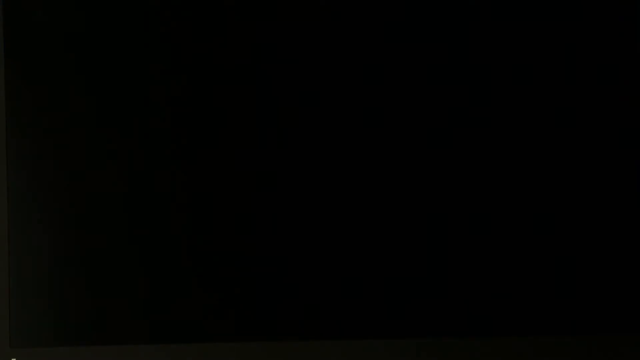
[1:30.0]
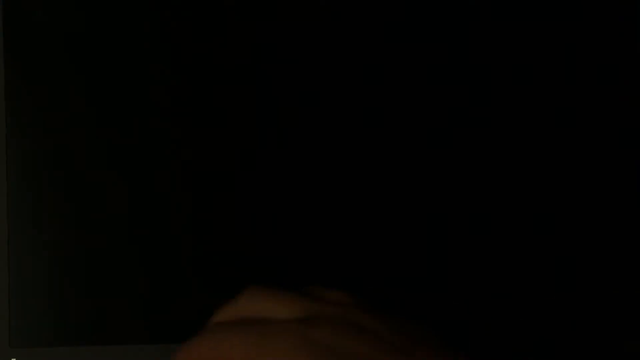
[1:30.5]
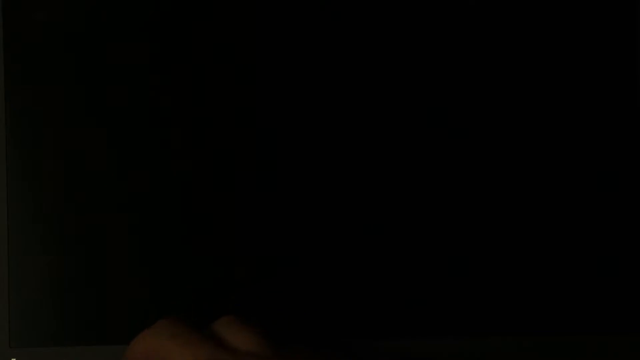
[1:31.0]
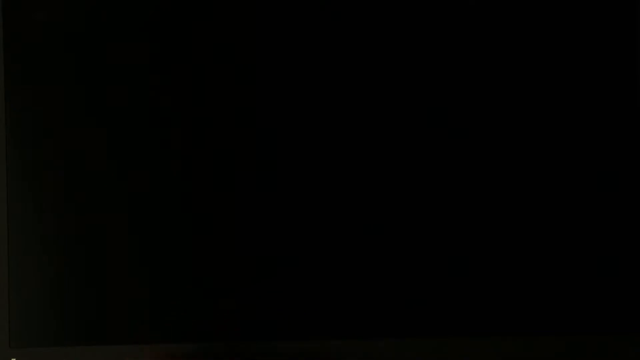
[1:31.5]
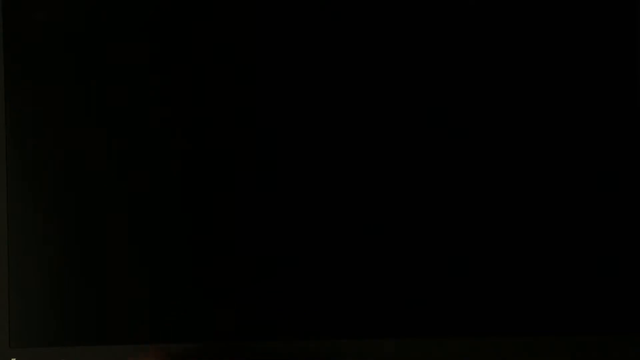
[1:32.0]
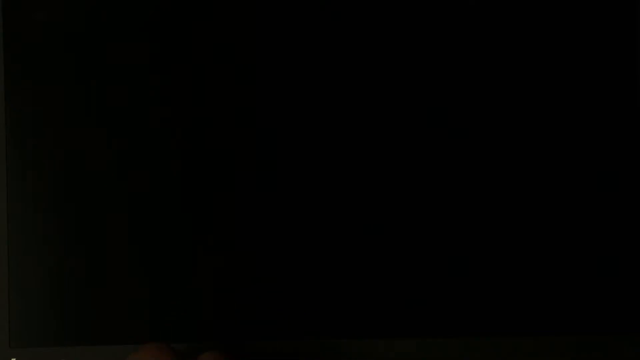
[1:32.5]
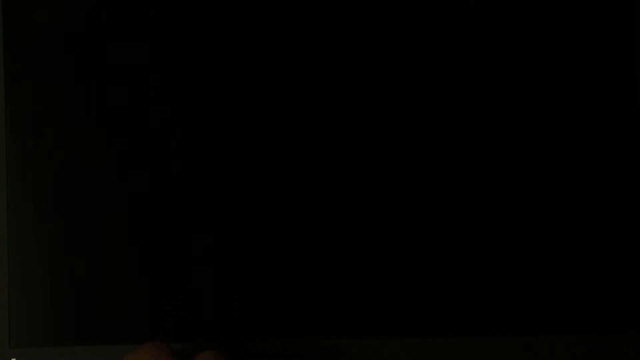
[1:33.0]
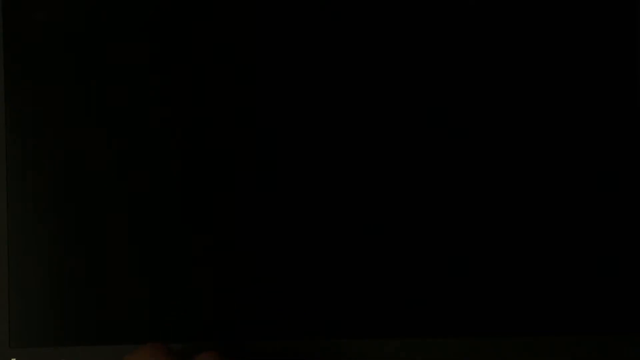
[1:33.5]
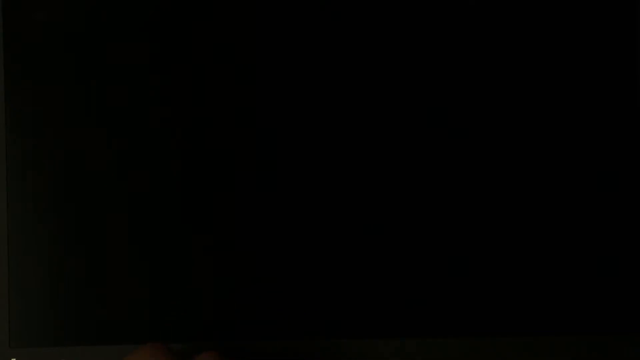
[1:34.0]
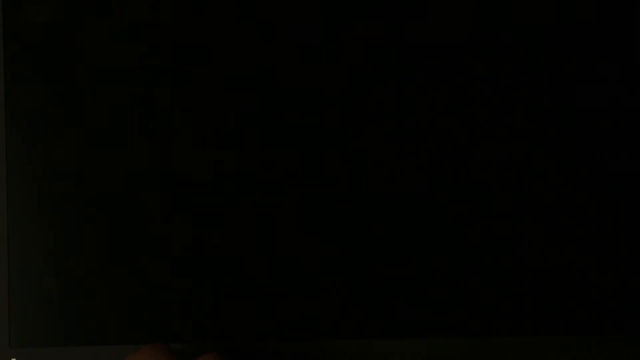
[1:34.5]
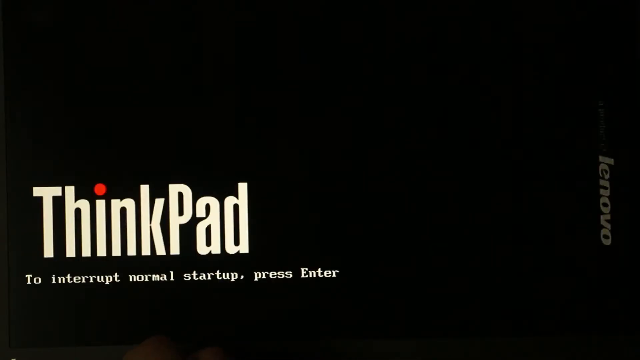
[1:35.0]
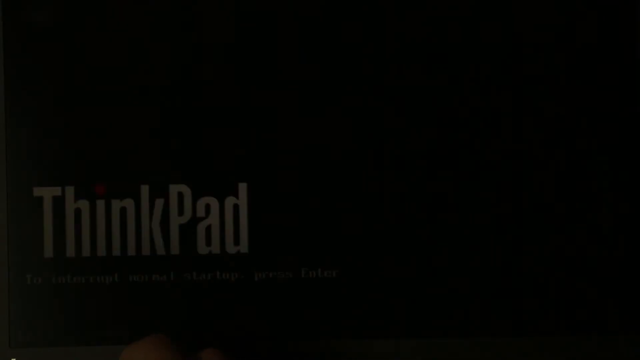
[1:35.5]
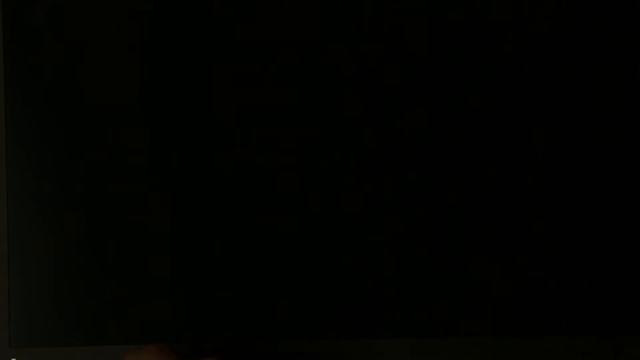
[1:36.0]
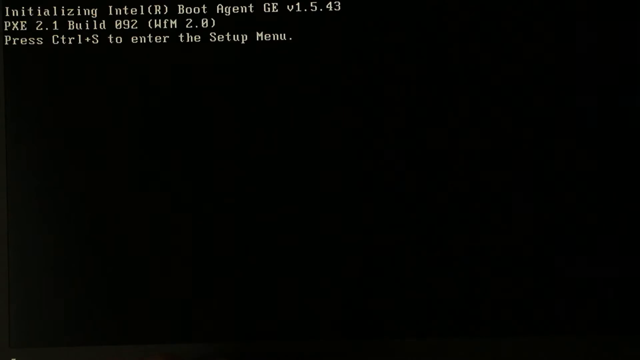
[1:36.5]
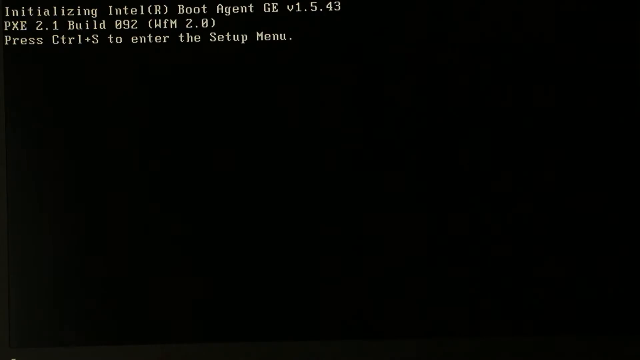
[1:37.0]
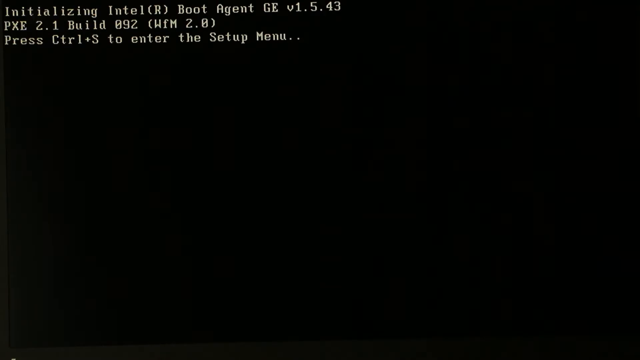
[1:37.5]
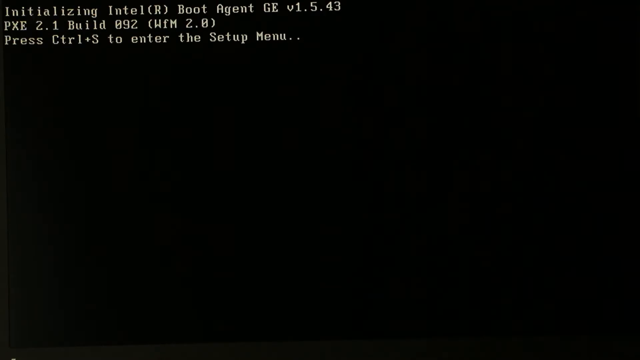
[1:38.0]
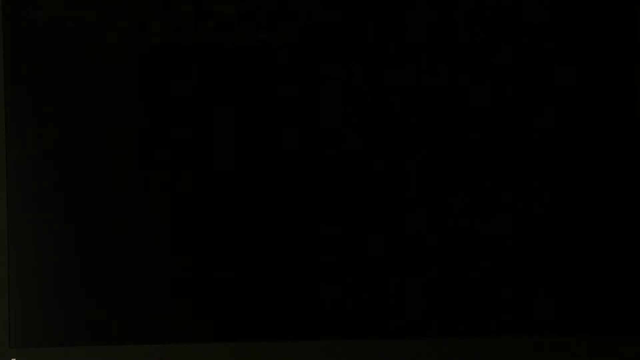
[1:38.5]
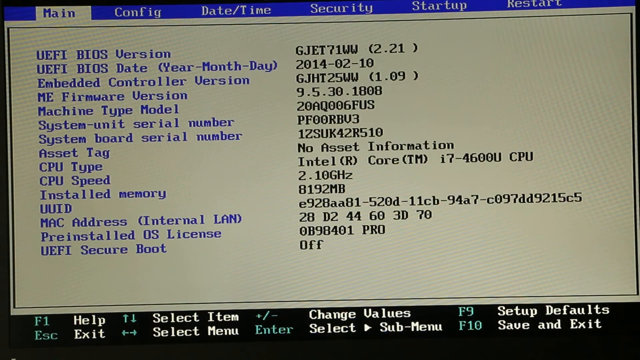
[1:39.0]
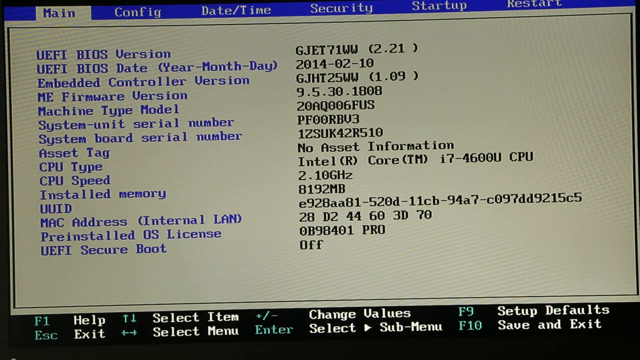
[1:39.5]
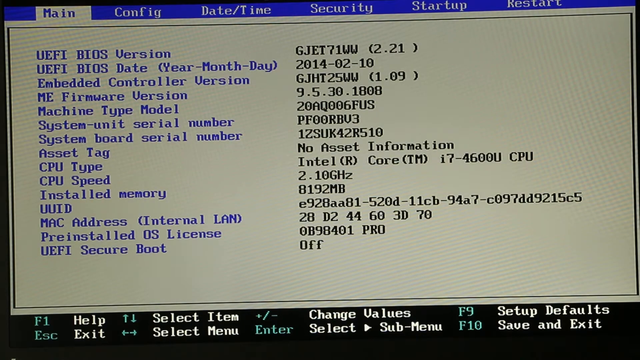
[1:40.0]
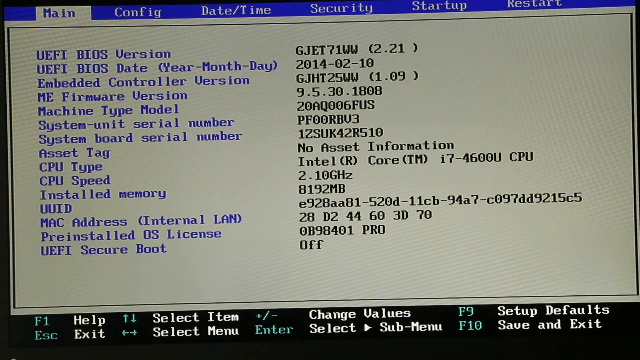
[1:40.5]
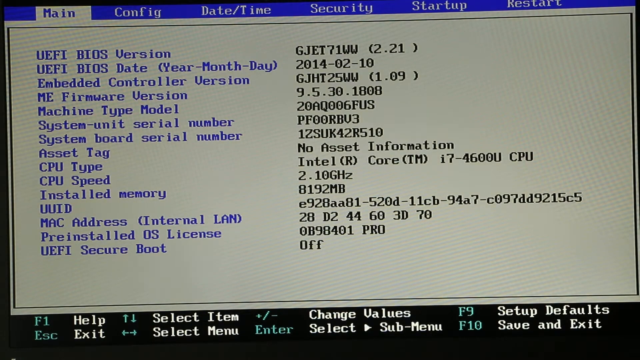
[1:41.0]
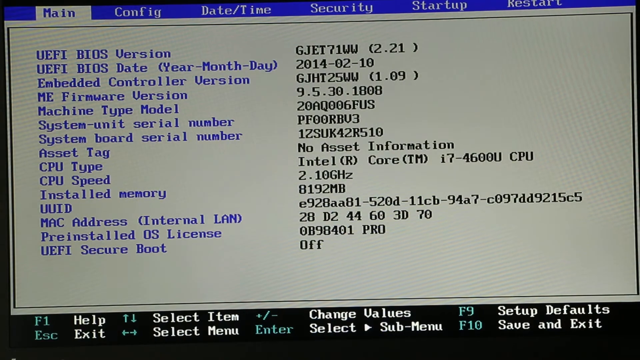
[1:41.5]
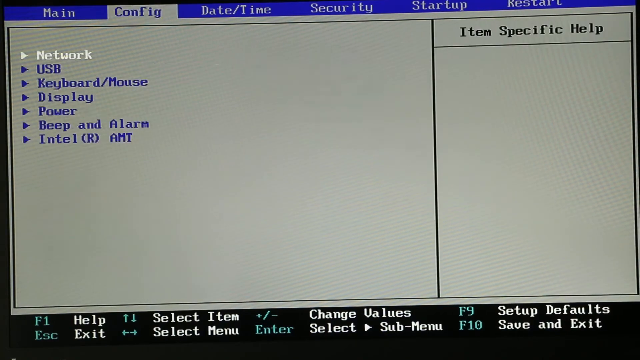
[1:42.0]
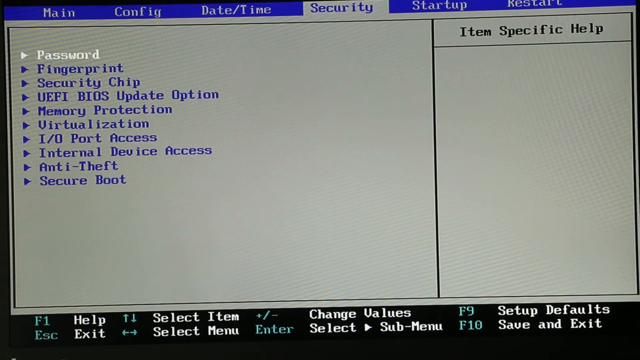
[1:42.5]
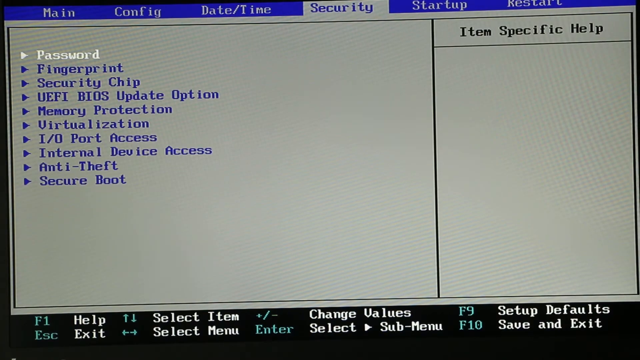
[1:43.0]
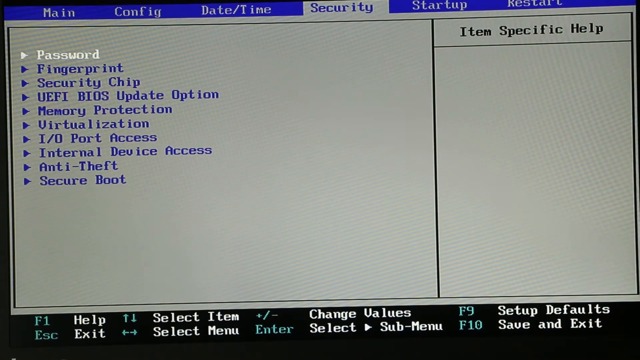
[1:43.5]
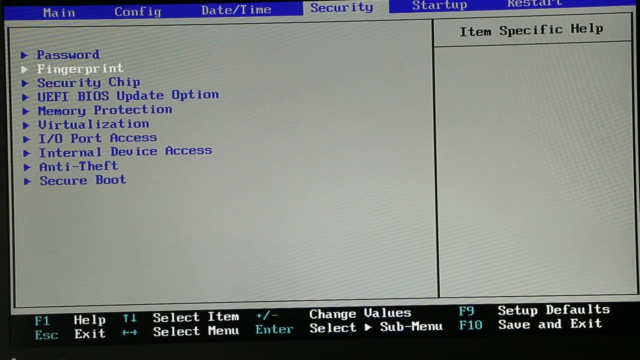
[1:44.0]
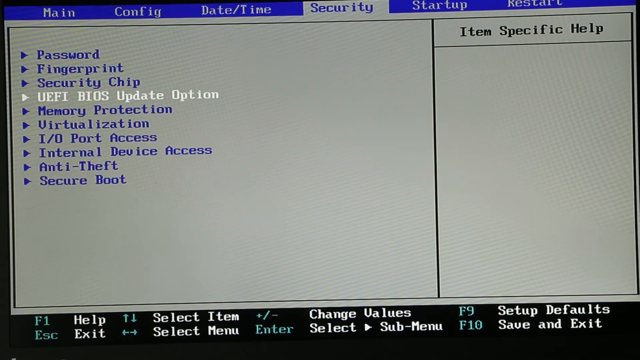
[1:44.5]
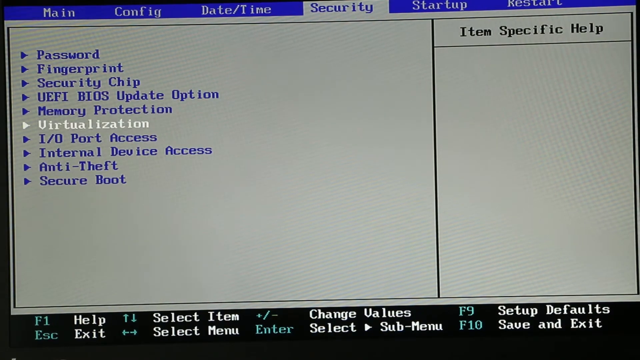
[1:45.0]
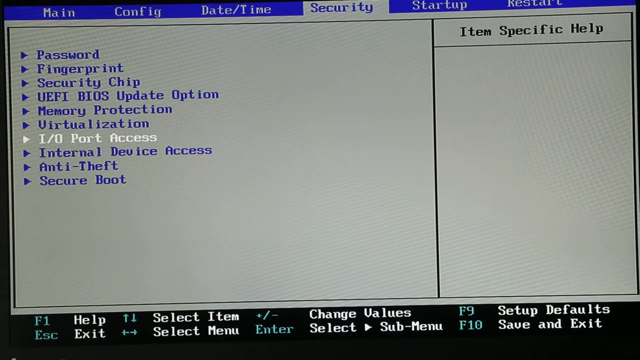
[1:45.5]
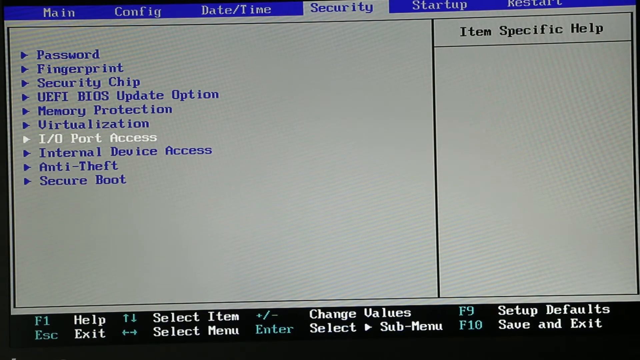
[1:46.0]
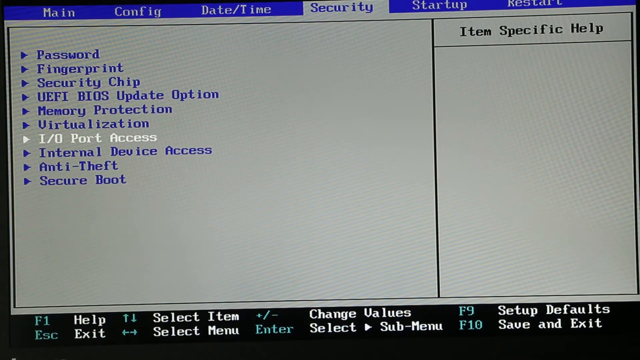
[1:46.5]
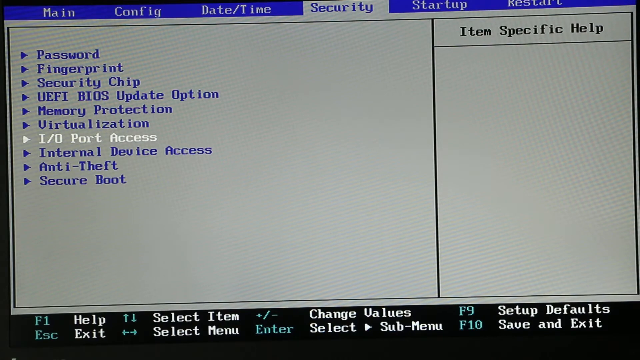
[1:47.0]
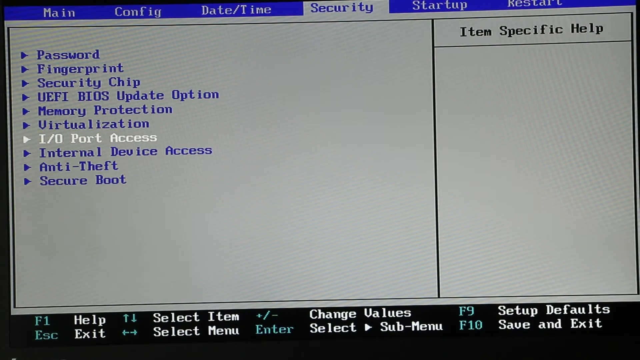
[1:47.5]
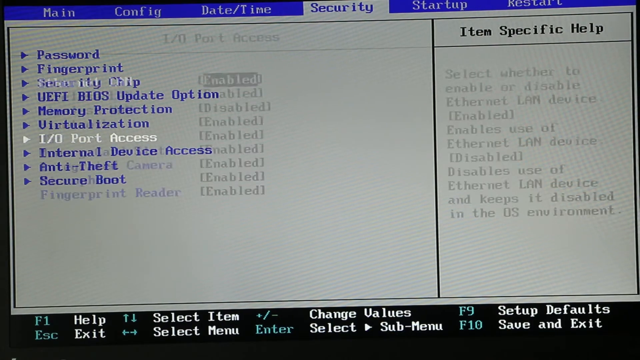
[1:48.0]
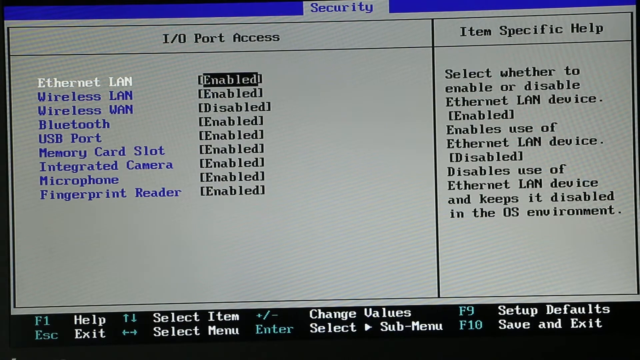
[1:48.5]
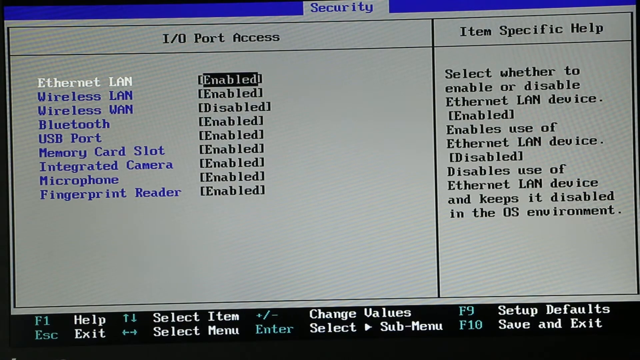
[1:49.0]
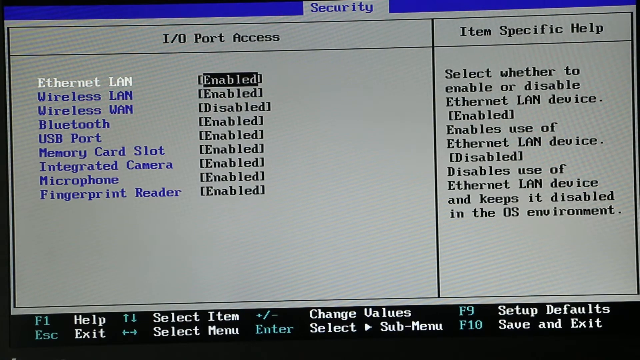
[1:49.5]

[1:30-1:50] An all-black screen stays black for a couple of seconds, and then the ThinkPad logo appears in white text, with "To interrupt normal startup press Enter" written underneath in a type font, and the brand name Lenovo moving horizontally on the right side. Hardware and hard-drive-style text then appears on the screen; this appears to be someone attempting a setup or perhaps fixing the settings on their hard drive. A menu for the hard drive is shown, with options for configuration, the date and time, and changes to the computer's settings. The user moves through the tabs along the blue bar at the top until they reach Security. In the Security tab, they move through the menu headings until they reach I/O Port Access. Once I/O Port Access is clicked, another menu appears on the screen showing the different port accesses available on the computer.